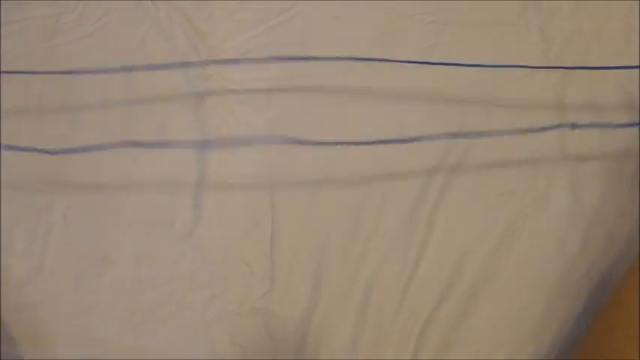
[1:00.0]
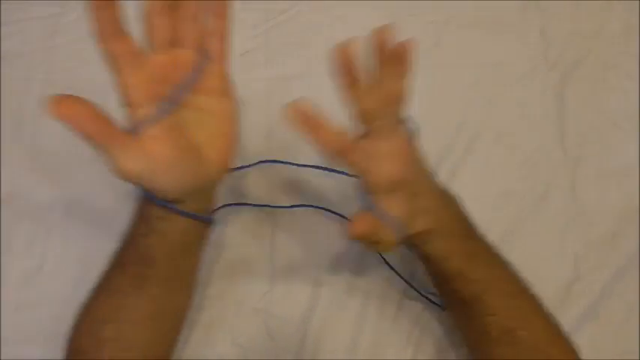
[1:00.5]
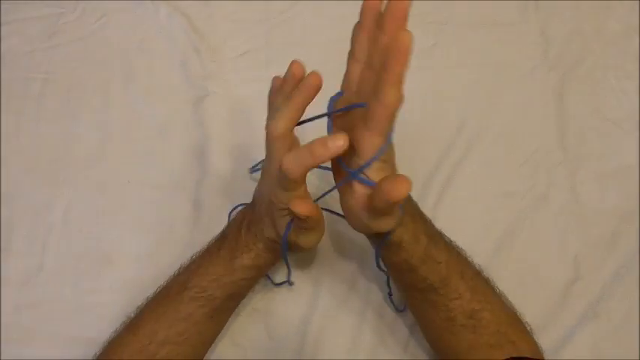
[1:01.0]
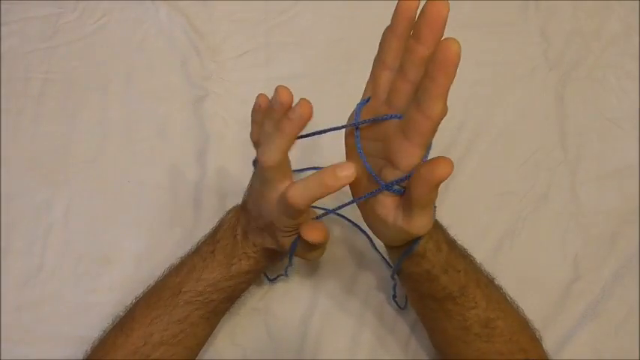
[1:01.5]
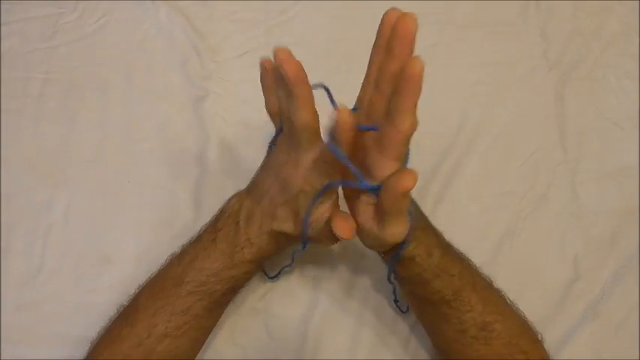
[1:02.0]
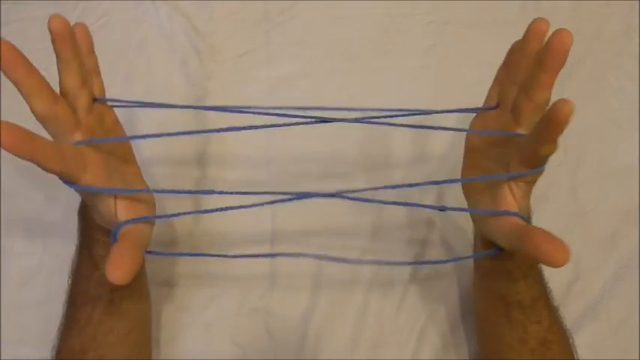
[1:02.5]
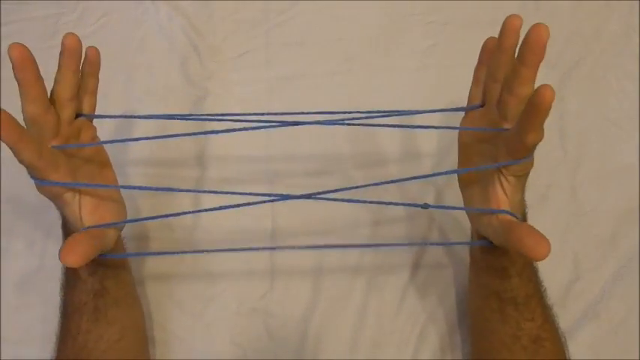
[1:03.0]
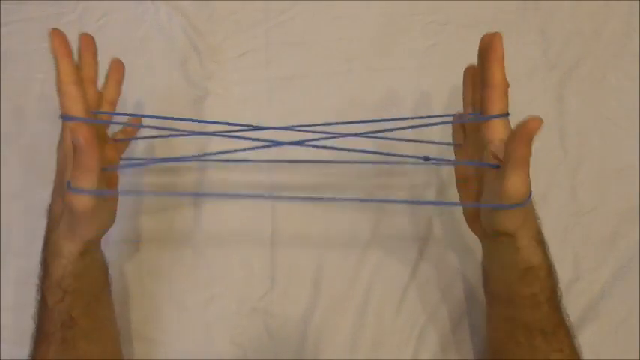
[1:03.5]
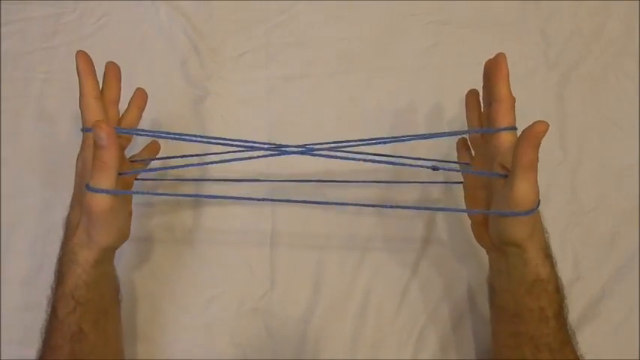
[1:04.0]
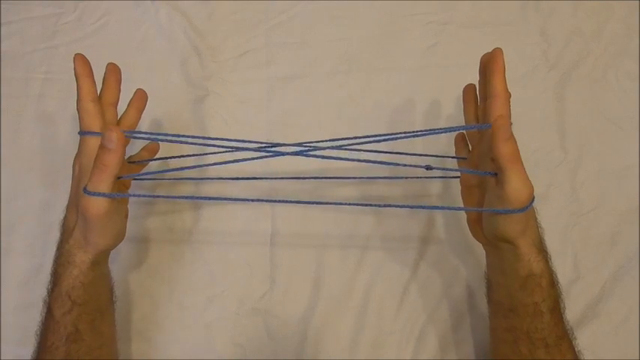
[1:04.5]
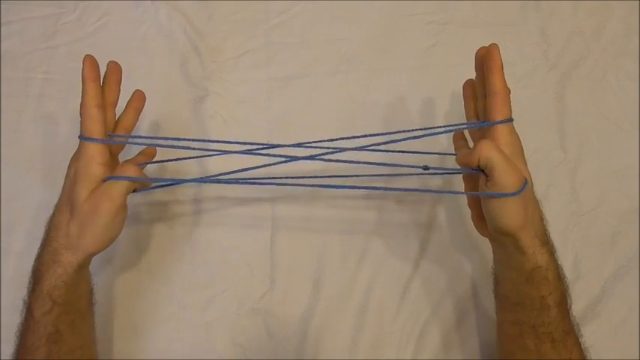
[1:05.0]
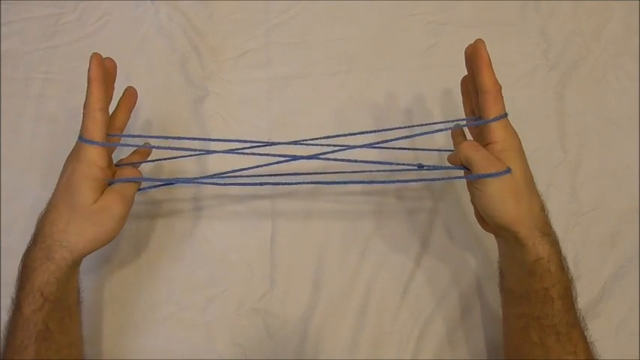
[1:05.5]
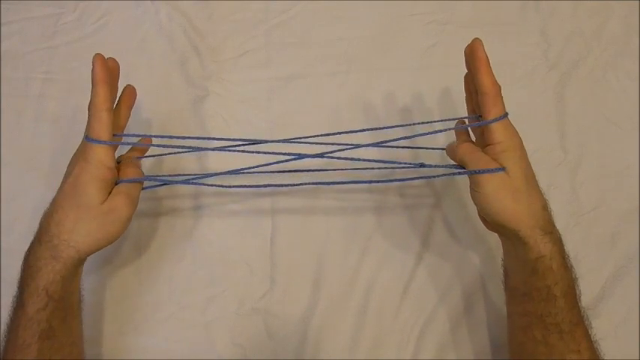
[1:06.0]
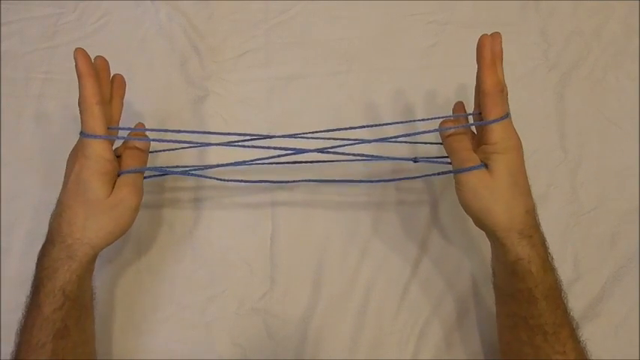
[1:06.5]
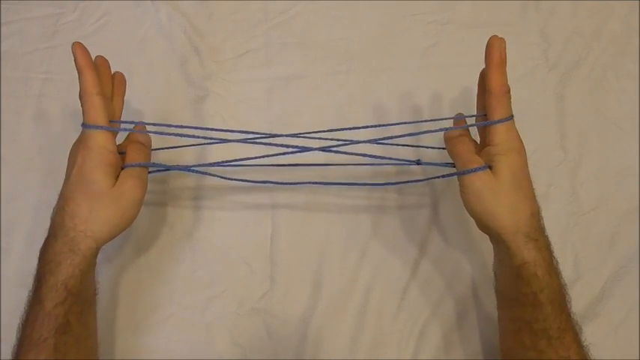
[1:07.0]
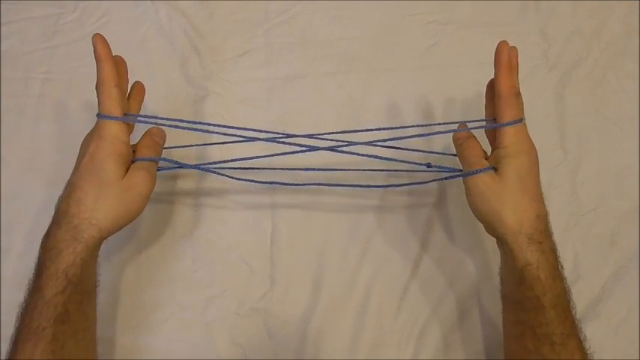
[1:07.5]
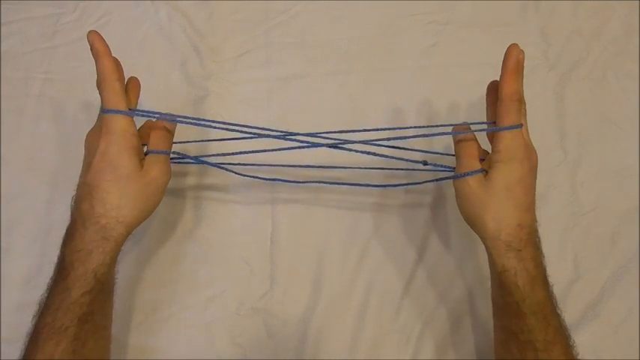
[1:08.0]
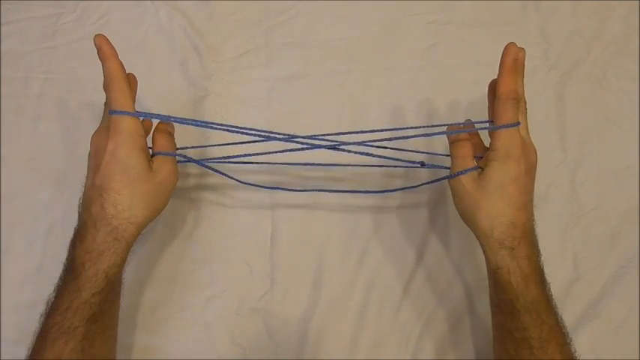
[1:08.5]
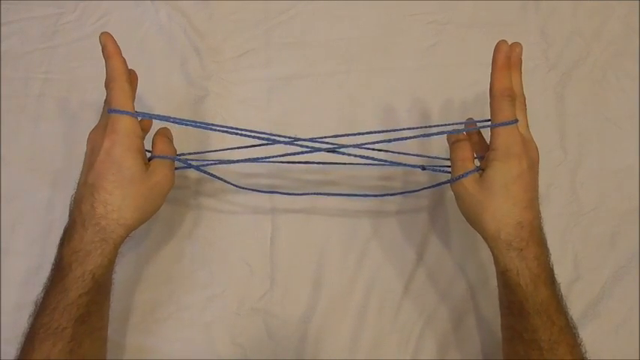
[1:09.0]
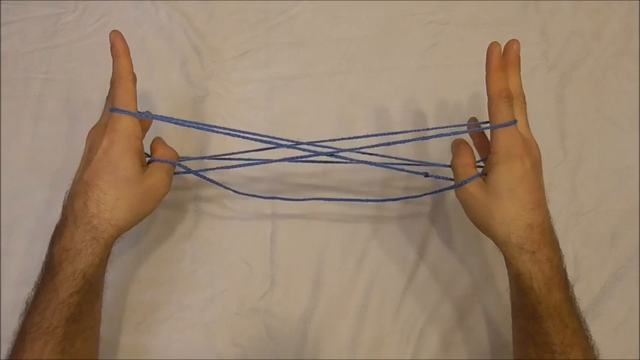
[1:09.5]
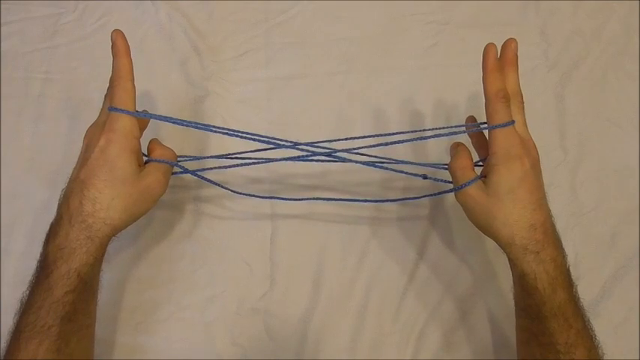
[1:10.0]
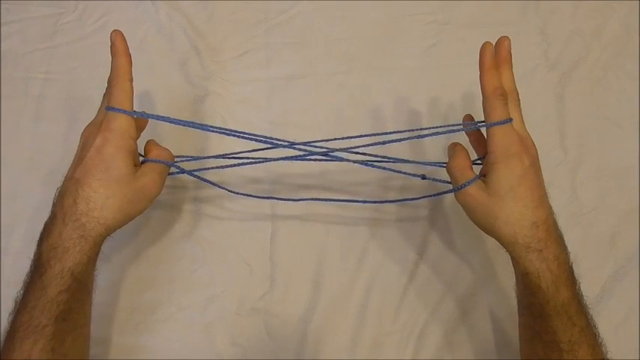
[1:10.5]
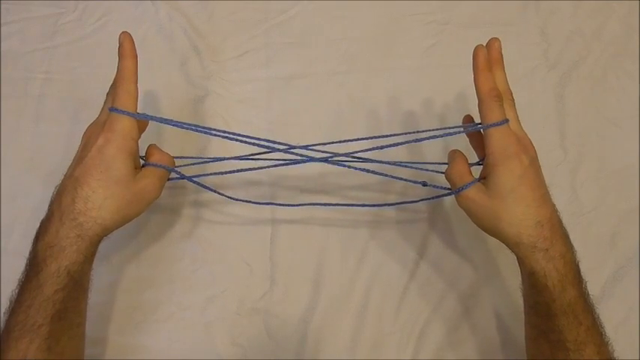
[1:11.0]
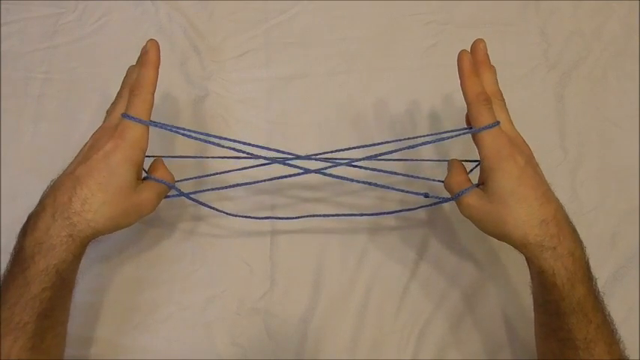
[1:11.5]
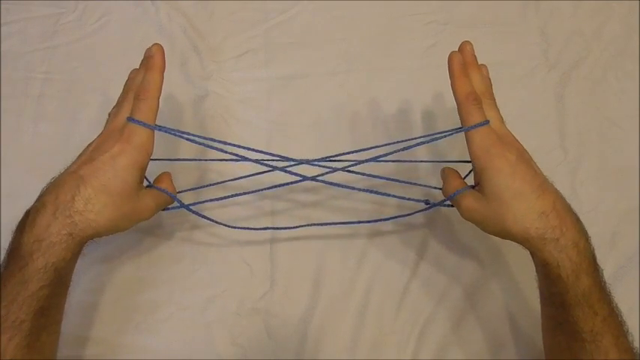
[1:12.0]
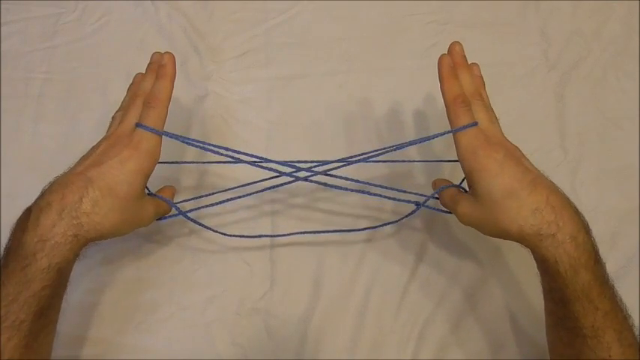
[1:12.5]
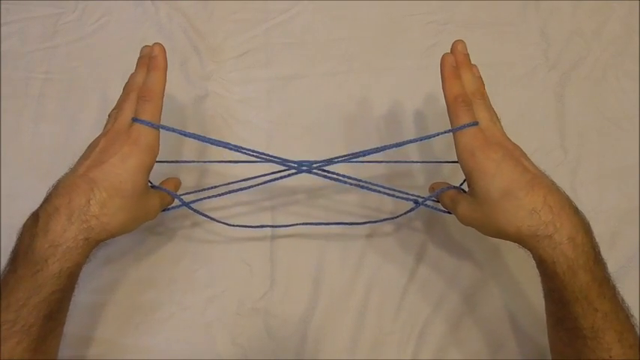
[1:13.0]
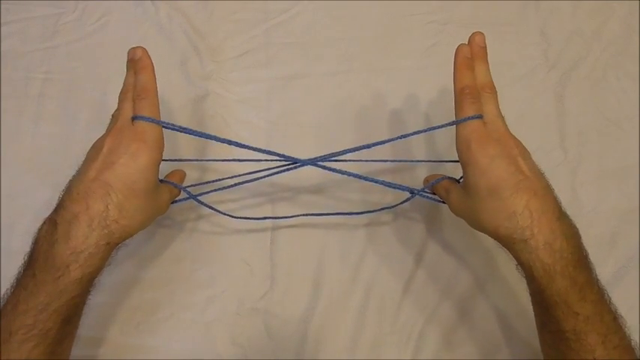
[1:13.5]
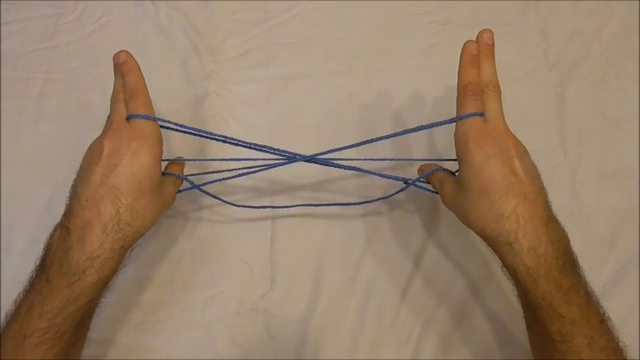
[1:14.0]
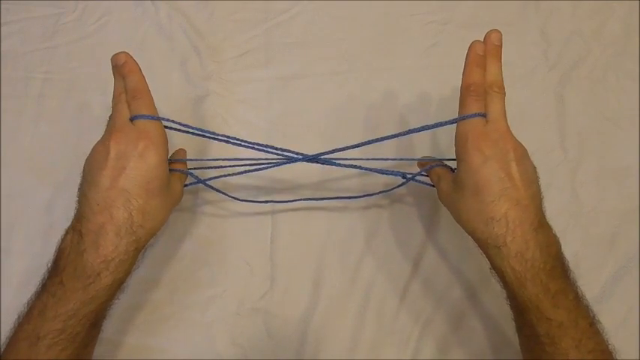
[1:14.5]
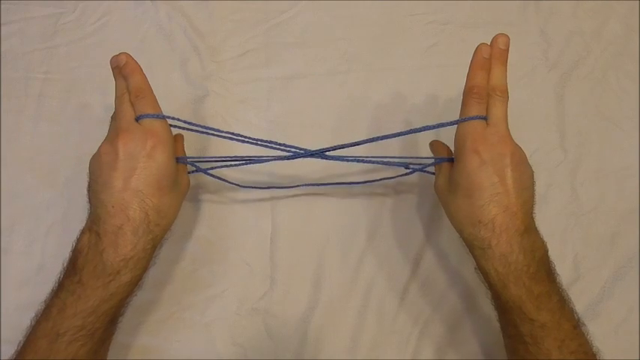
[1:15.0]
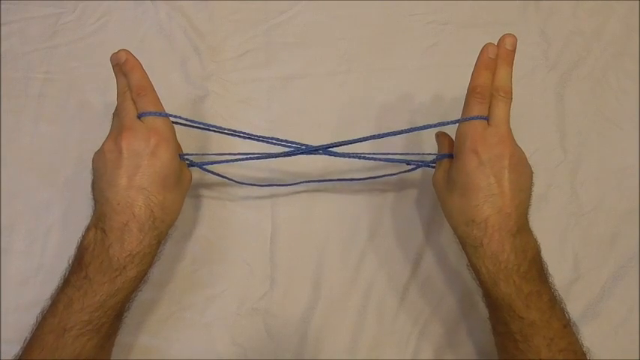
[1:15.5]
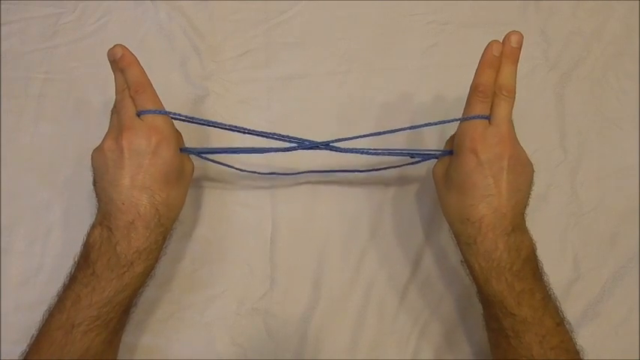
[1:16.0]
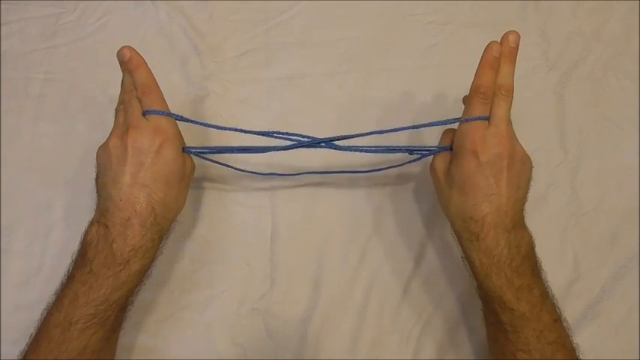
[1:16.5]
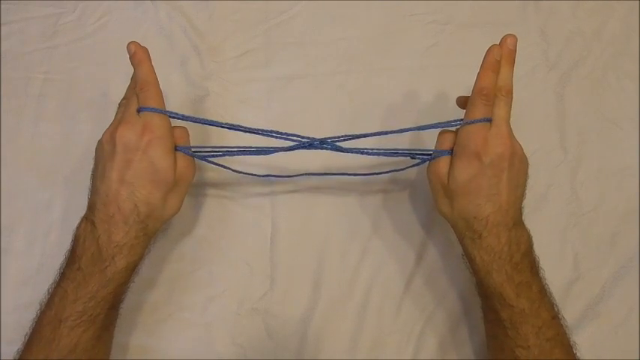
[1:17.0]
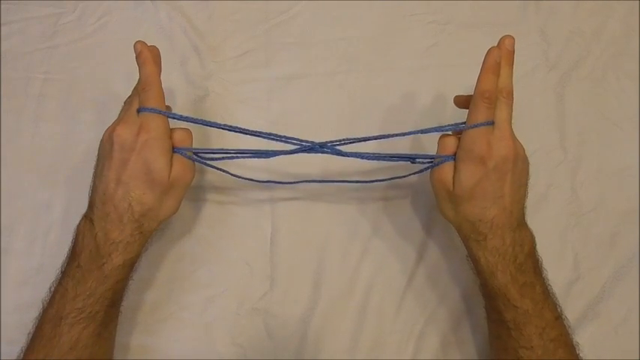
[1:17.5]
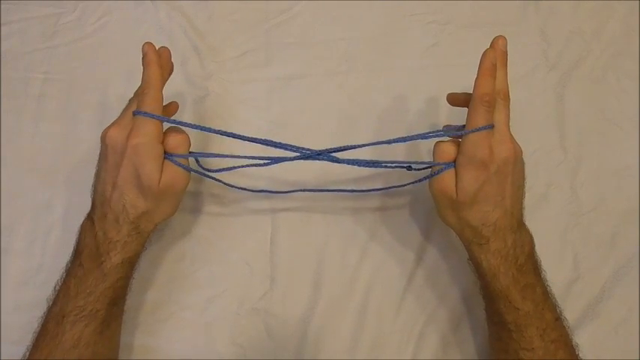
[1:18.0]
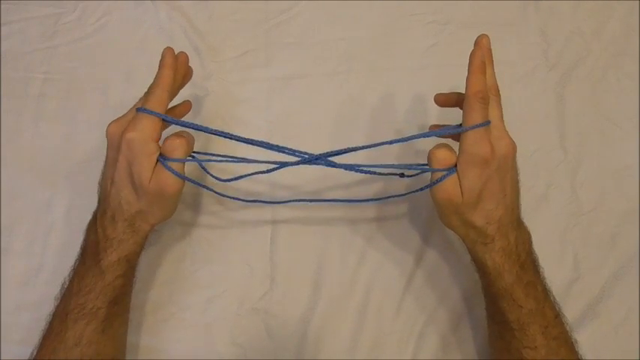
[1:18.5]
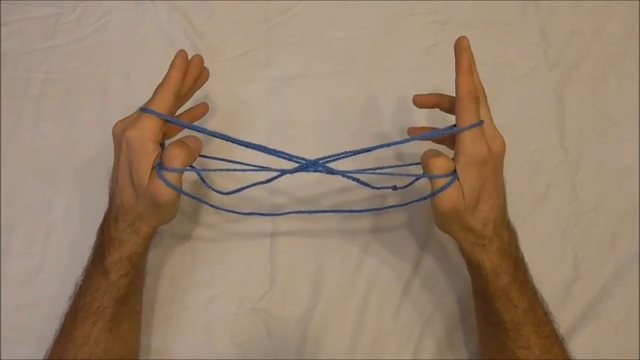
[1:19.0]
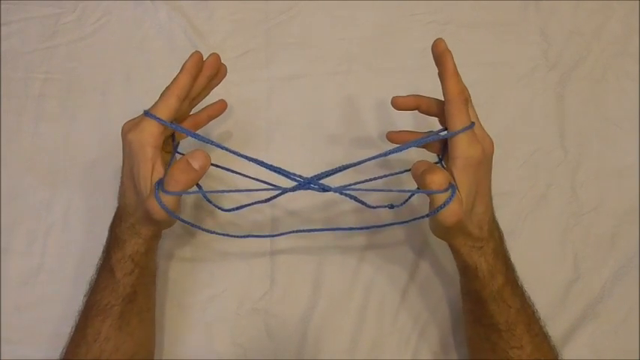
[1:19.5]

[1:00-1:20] The string appears to be in a neutral state, and the man winds it between his fingers. He appears to tuck his two thumbs under the first set of strings, then turns his hands in awkward motions, very slowly. With his two thumbs he seems to cut another set of strings to fold it into the initial state of the shape. His fingernails are manicured, and he has hair on his forearm. The string is blue. The shadow of his hands shows on the white tablecloth, which looks like it is made of vinyl; the tablecloth has some slight ripples, as it is not completely smooth, tightened or fitted onto the table. After taking the string apart, he appears to bend his hands and use his thumbs. He reconstructs the initial shape of the string and uses his thumbs to tuck under another set of strings to make the first step.